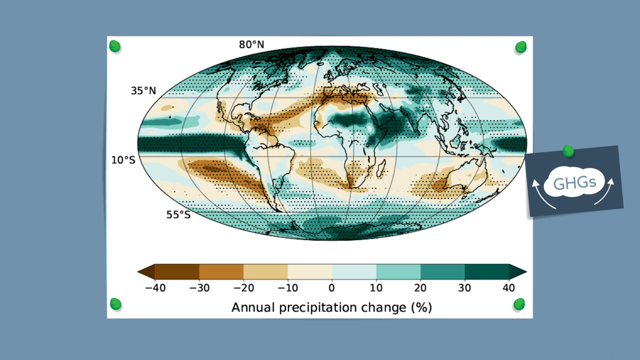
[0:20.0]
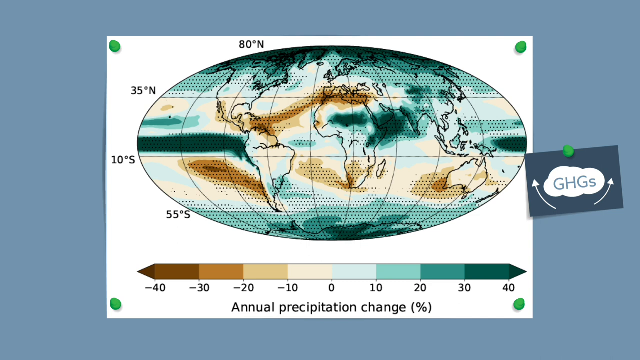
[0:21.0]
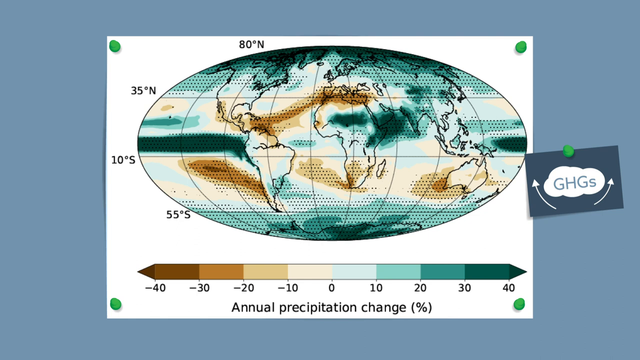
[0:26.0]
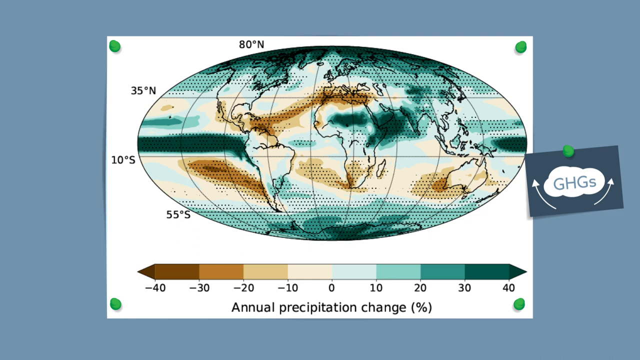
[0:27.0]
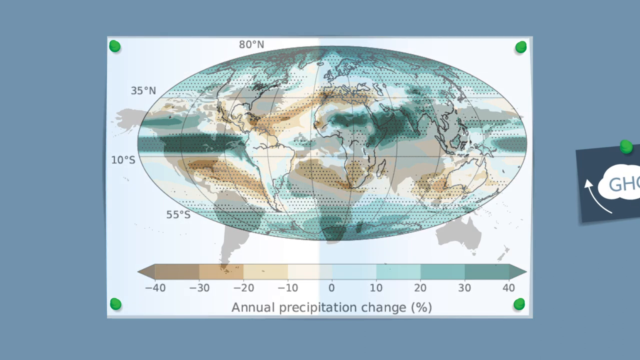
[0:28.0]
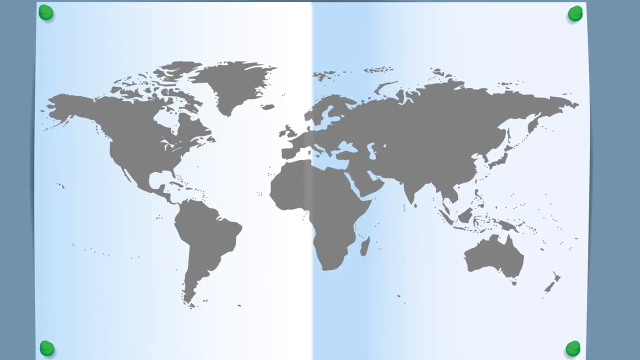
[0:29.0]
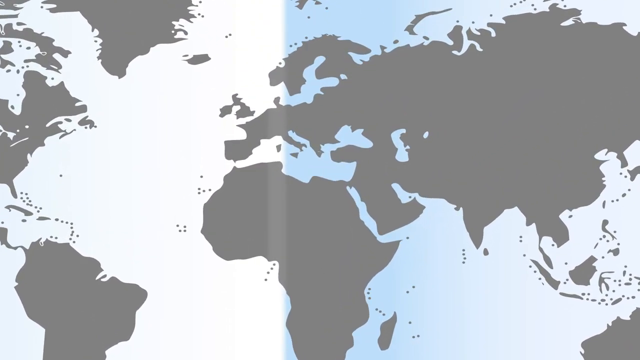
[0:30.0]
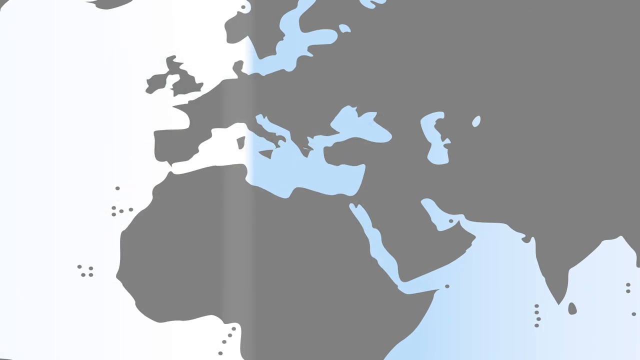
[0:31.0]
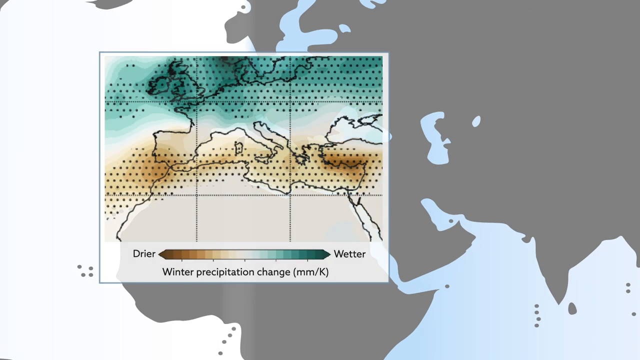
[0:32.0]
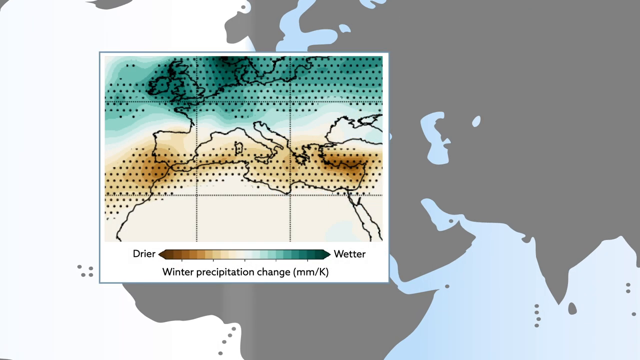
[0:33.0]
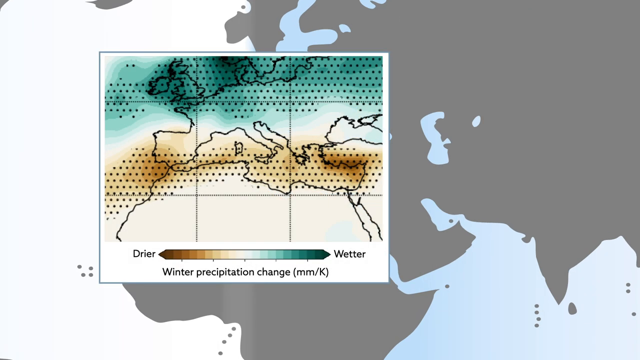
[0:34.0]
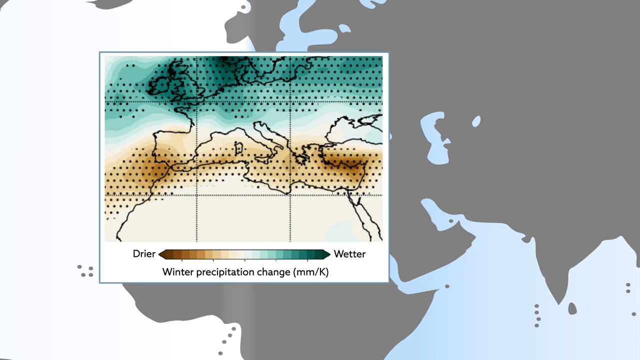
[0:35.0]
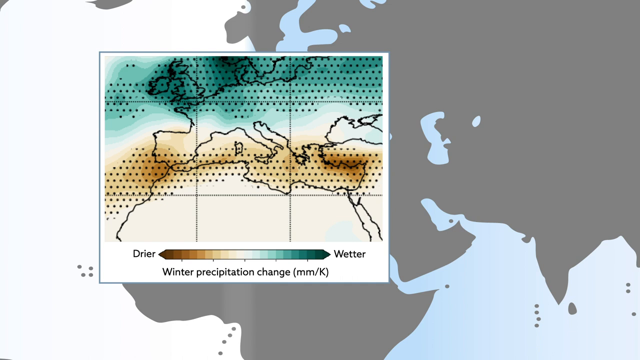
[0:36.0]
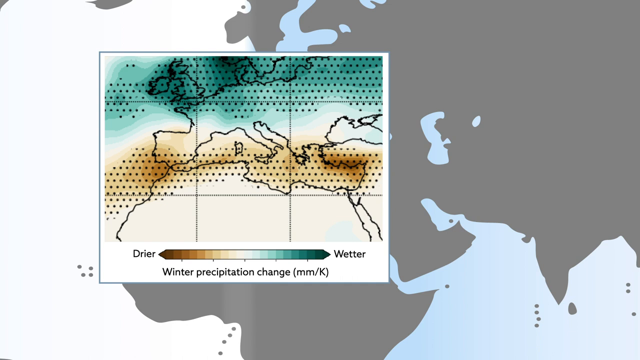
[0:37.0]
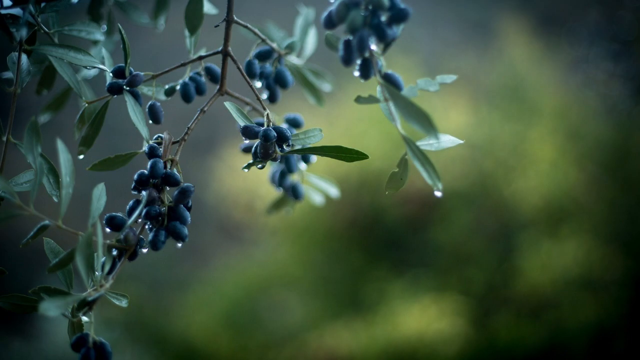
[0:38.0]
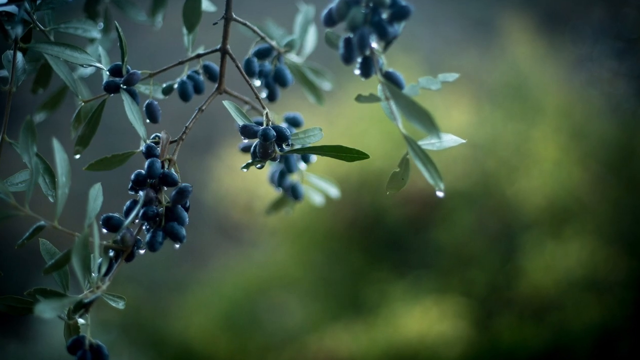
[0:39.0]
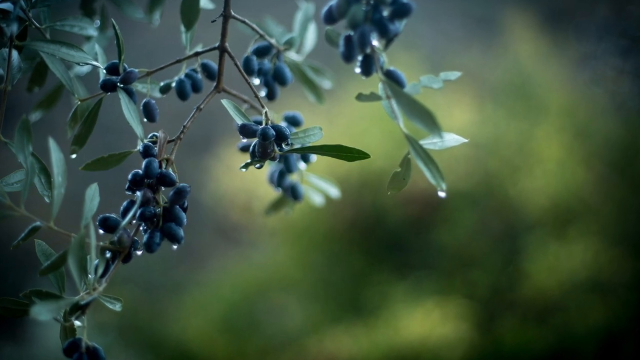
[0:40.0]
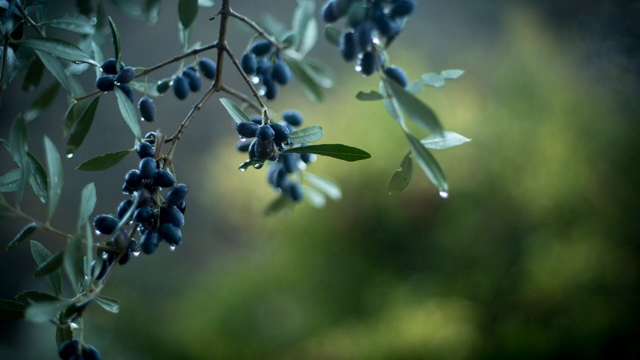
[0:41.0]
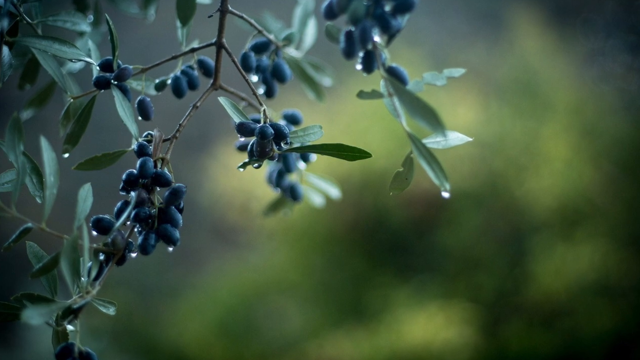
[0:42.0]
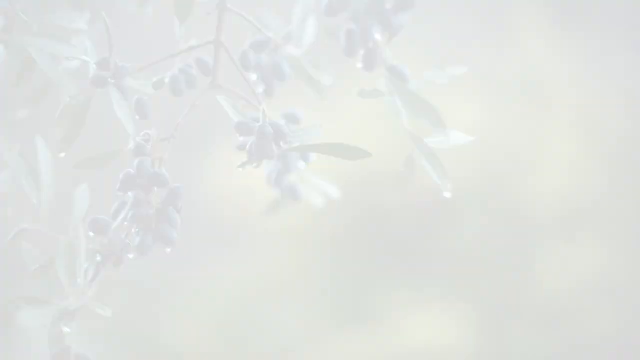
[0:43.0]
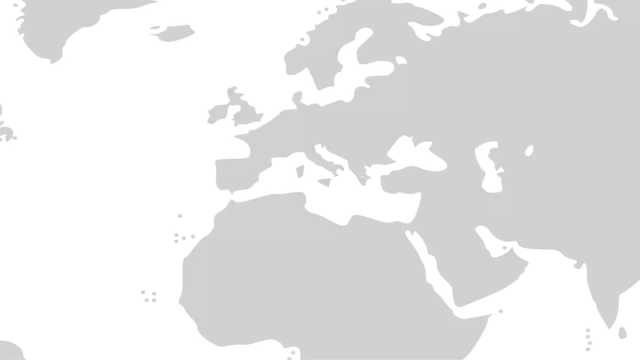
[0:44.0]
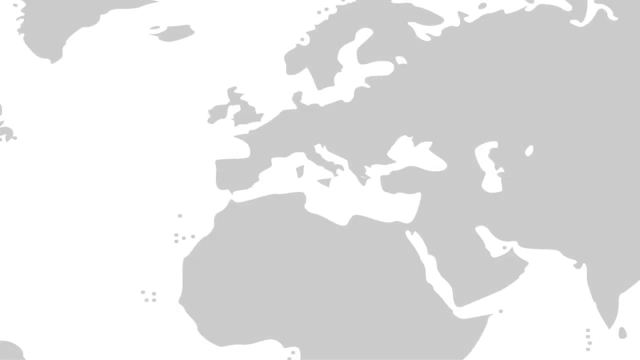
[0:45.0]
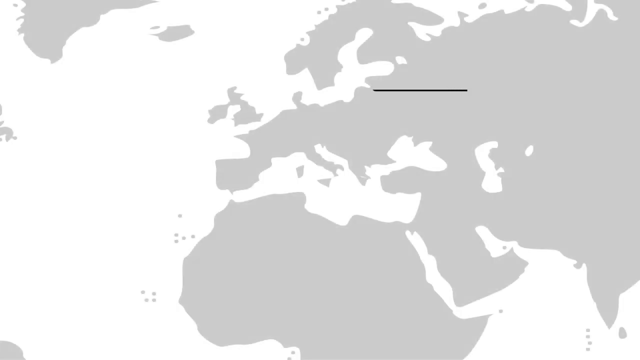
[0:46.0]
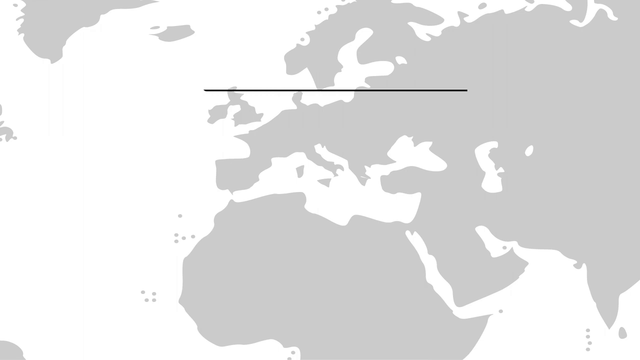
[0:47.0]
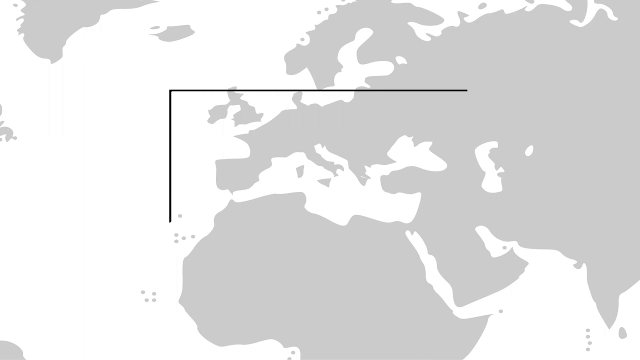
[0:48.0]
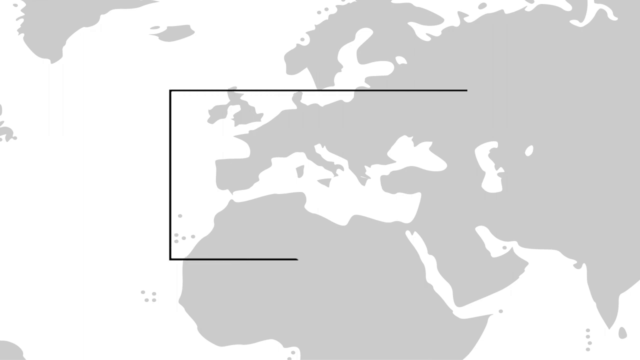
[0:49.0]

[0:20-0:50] The oval world map remains on screen. Below it is a colorful graph split into eight sections representing percentages, with 0 in the middle, -10, -20, -30 and -40 to the left, and 10, 20, 30 and +40 to the right. The scene changes to a different world map with gray continents. The map zooms in, focusing on the Mediterranean Sea. A closer, square map of the Mediterranean Sea area appears on the left side, with colorful shading of rainfall and winter precipitation change across the region: the lower parts experience less rainfall and the upper, more northern parts experience more. The map disappears, and a plant with small bundles of what look like blueberries appears against a very blurry background. The scene then shows the Mediterranean Sea area again, with a black rectangular outline going around the Mediterranean area.